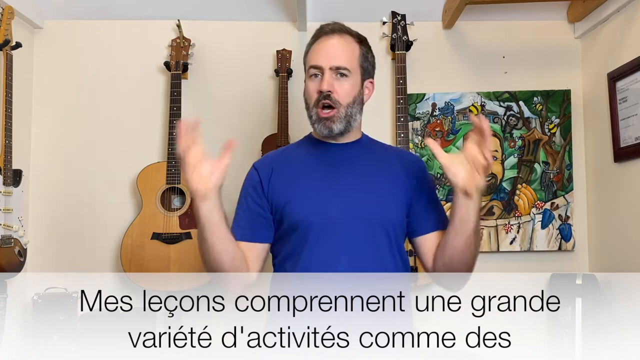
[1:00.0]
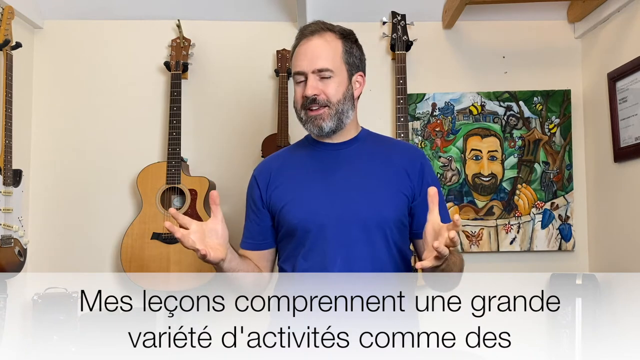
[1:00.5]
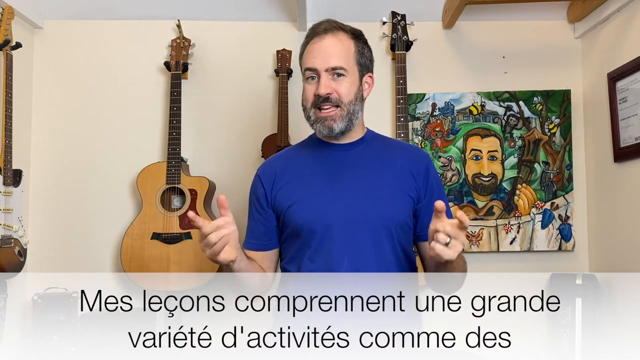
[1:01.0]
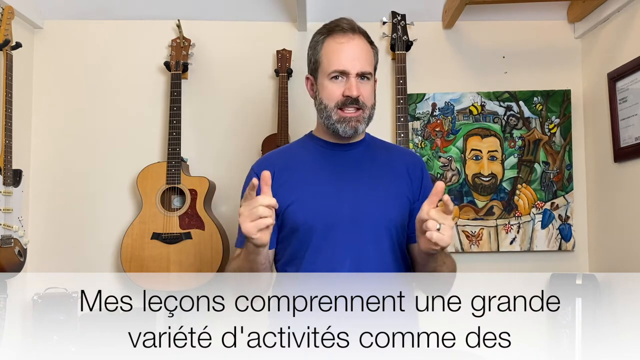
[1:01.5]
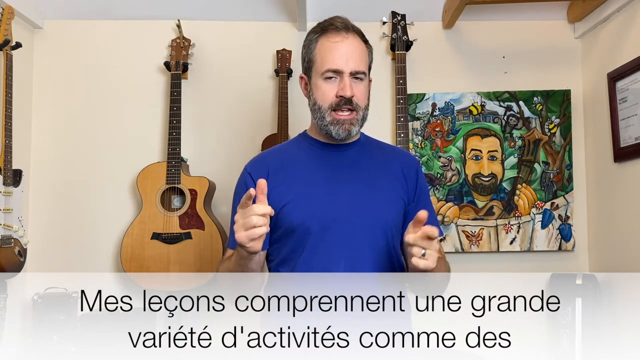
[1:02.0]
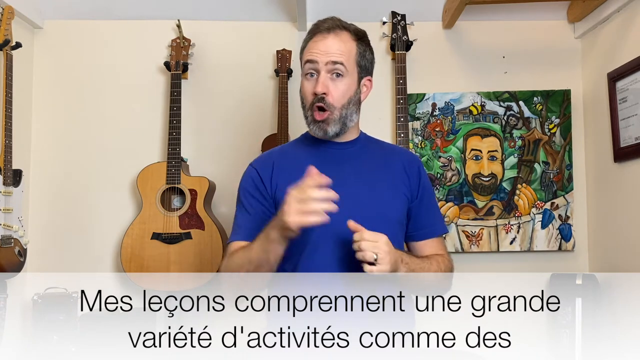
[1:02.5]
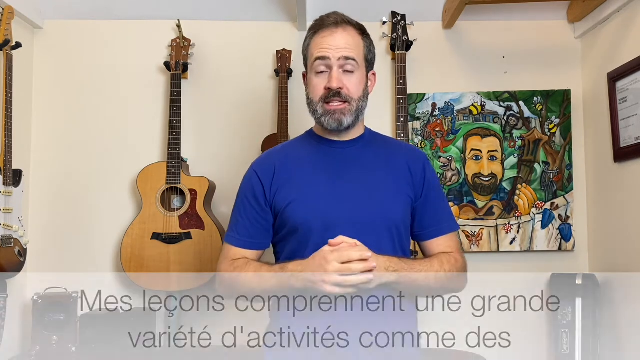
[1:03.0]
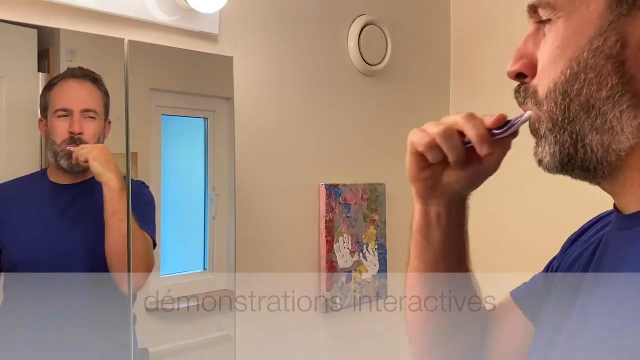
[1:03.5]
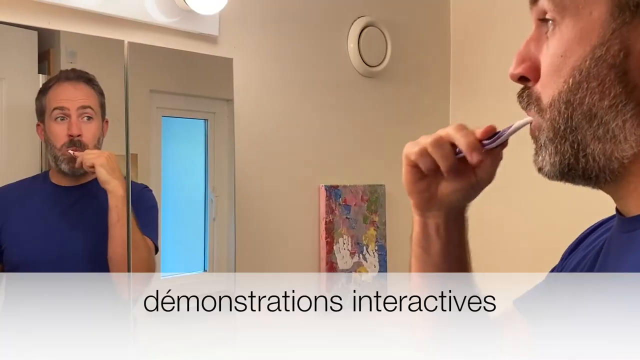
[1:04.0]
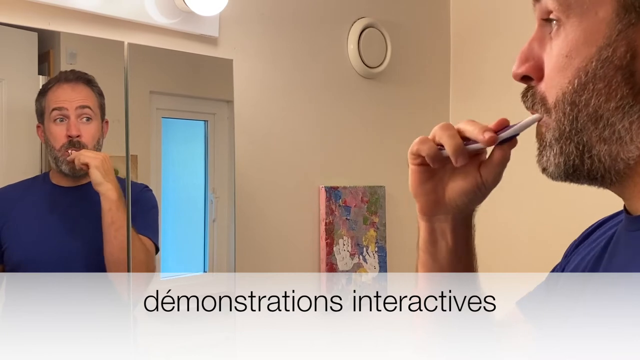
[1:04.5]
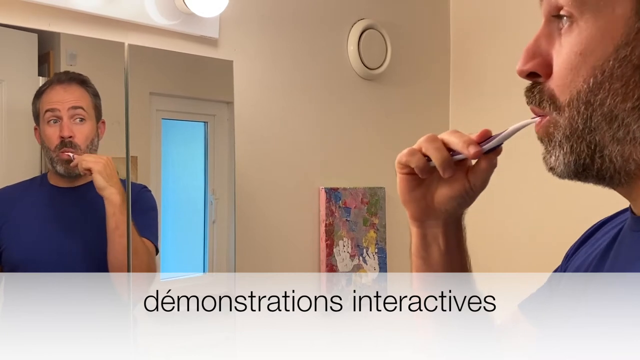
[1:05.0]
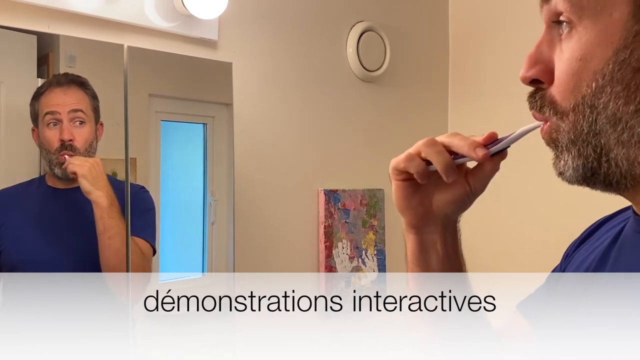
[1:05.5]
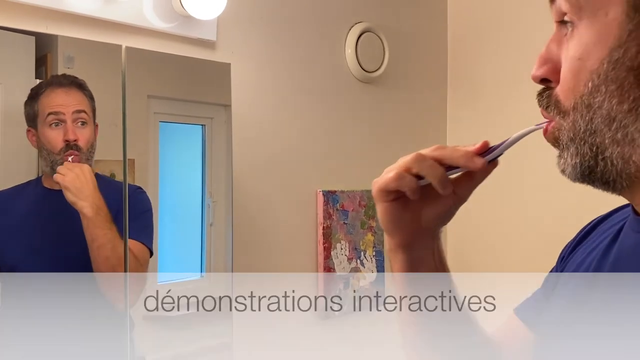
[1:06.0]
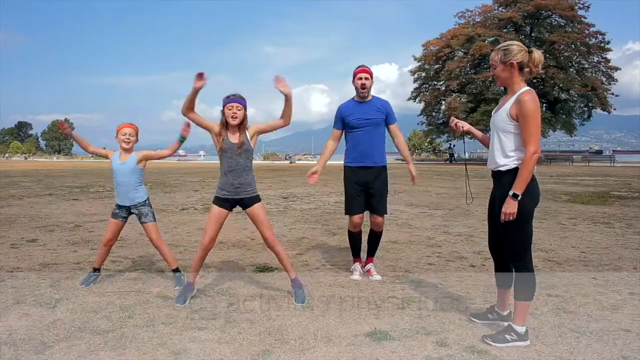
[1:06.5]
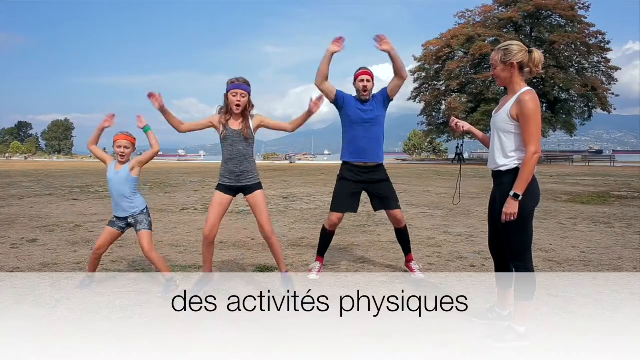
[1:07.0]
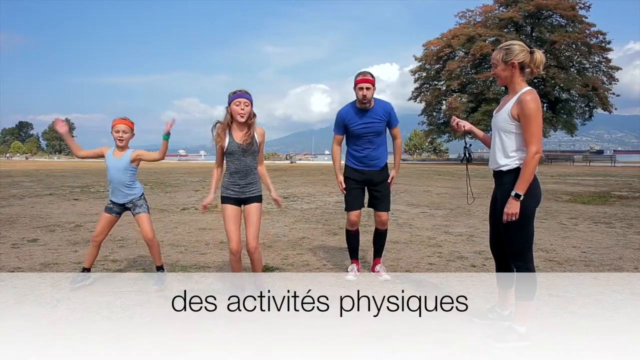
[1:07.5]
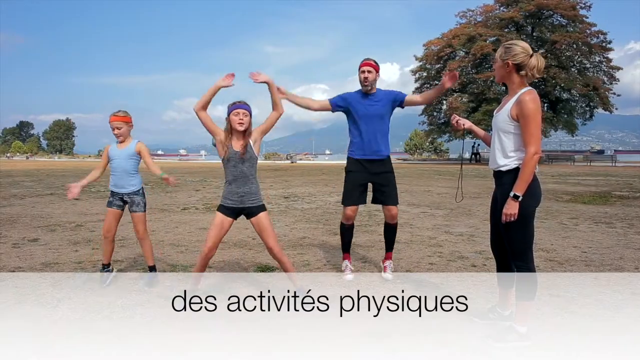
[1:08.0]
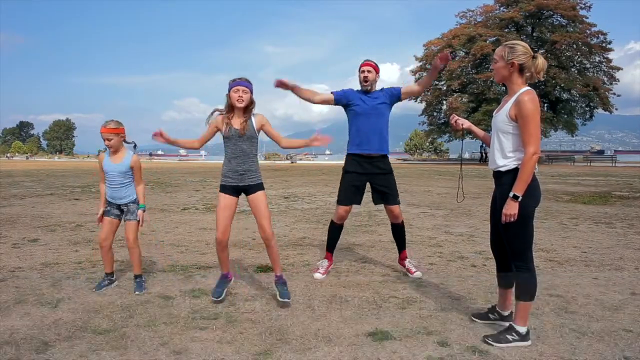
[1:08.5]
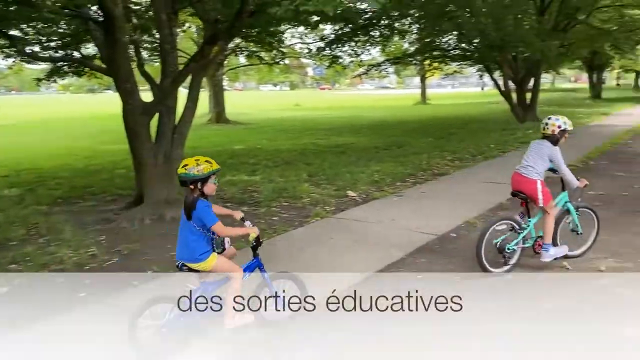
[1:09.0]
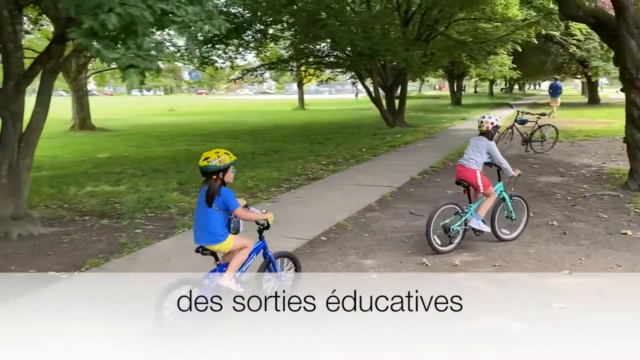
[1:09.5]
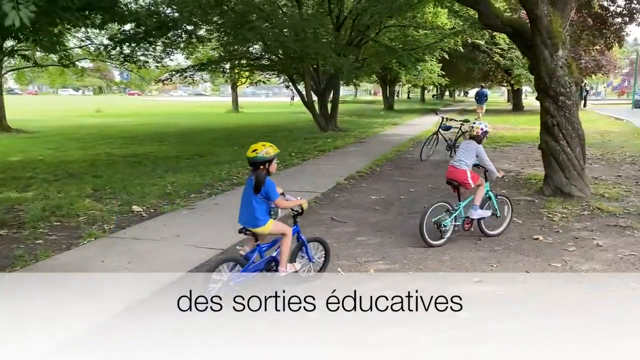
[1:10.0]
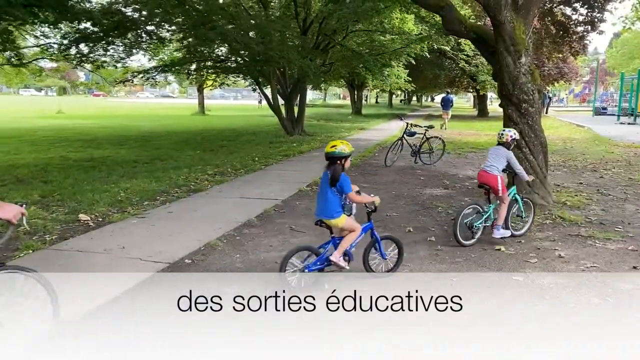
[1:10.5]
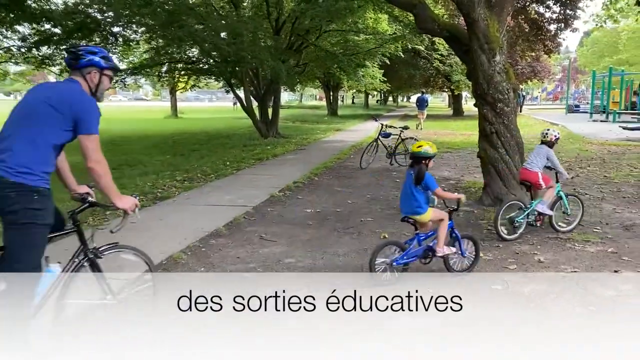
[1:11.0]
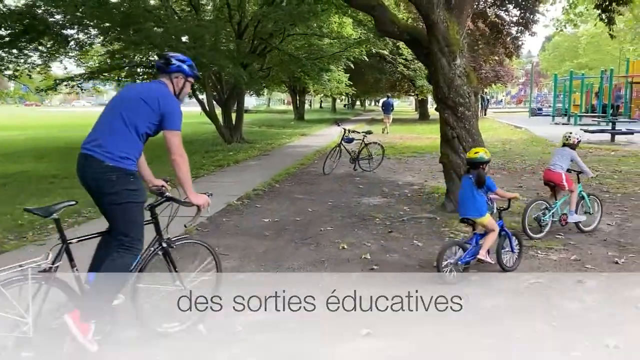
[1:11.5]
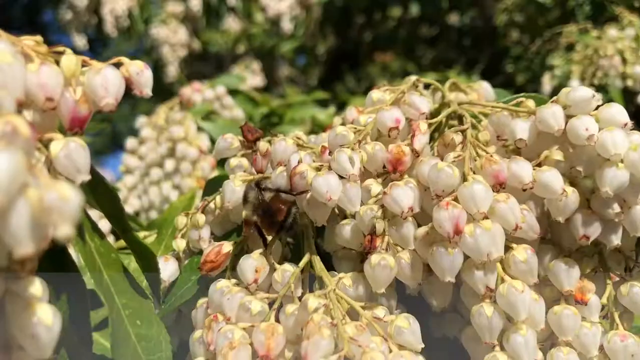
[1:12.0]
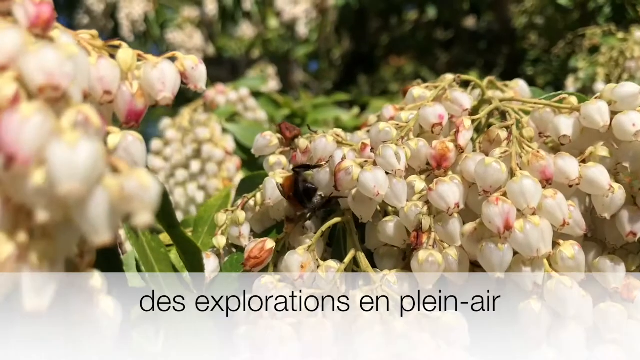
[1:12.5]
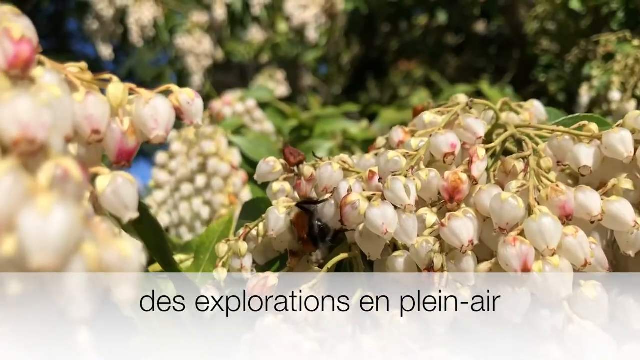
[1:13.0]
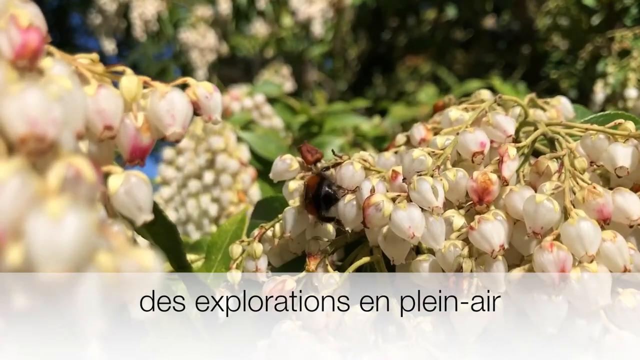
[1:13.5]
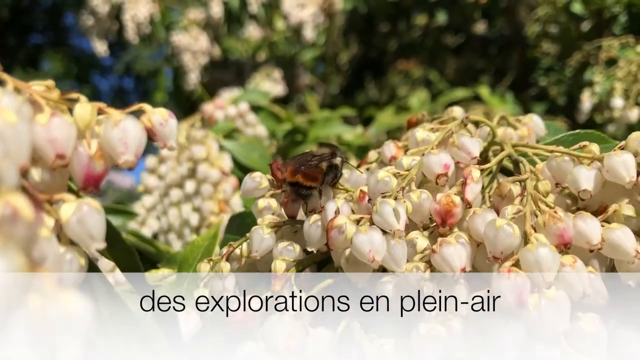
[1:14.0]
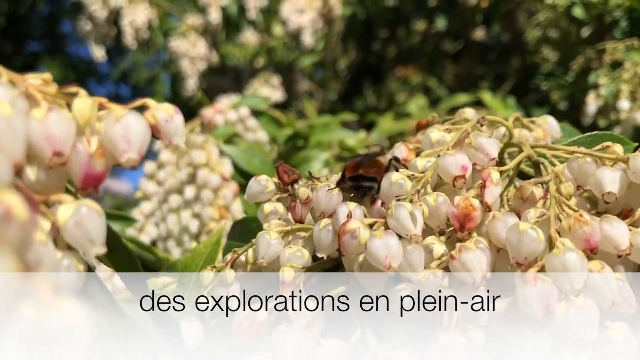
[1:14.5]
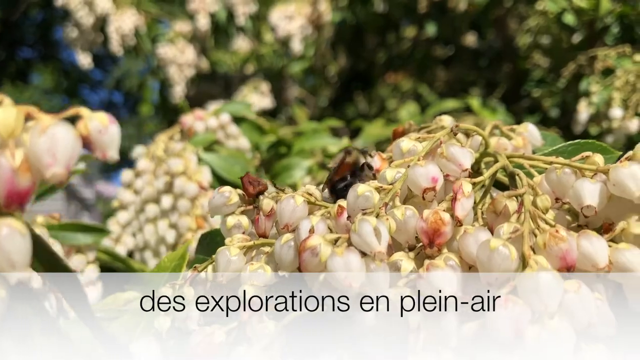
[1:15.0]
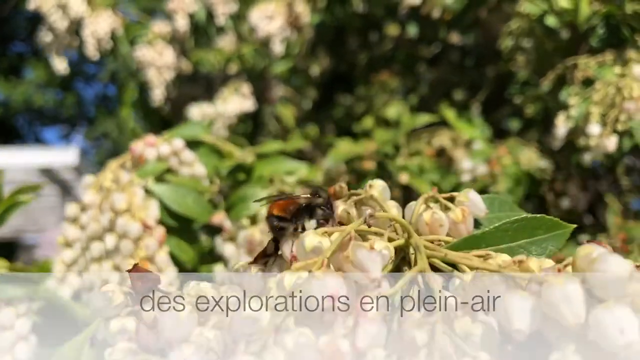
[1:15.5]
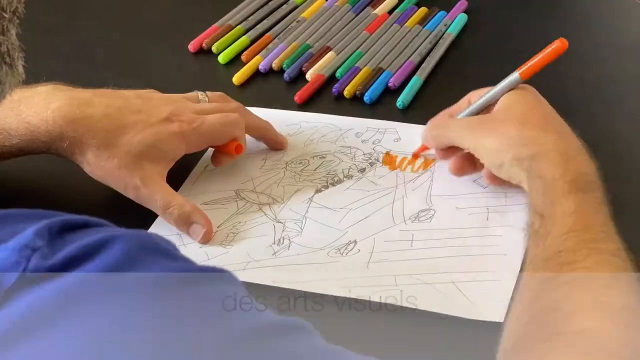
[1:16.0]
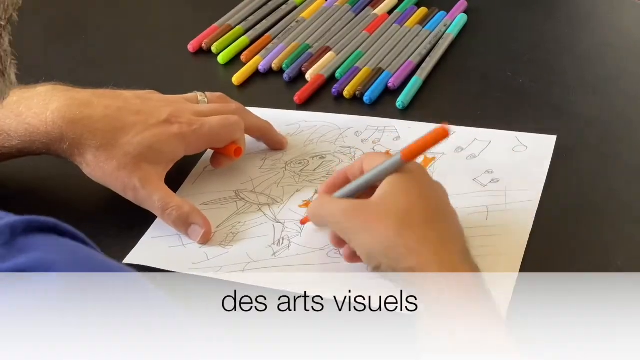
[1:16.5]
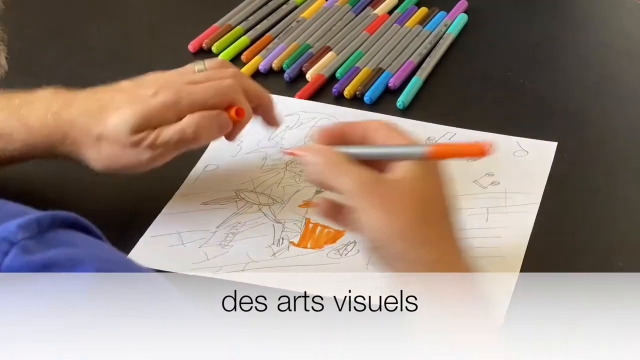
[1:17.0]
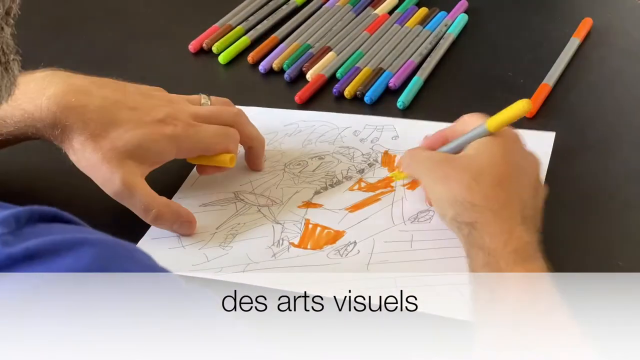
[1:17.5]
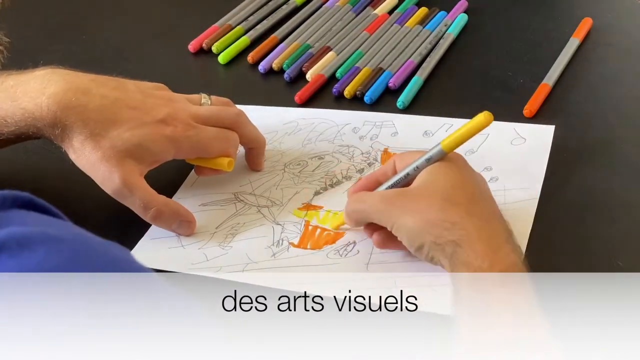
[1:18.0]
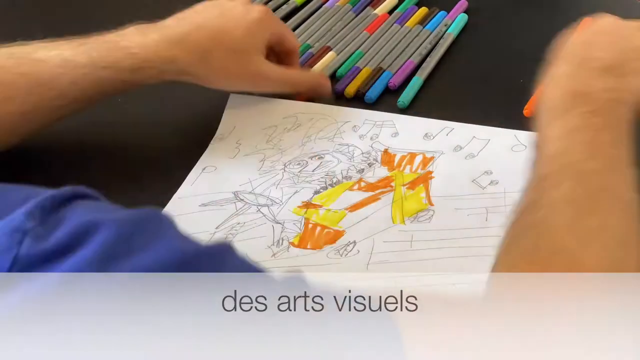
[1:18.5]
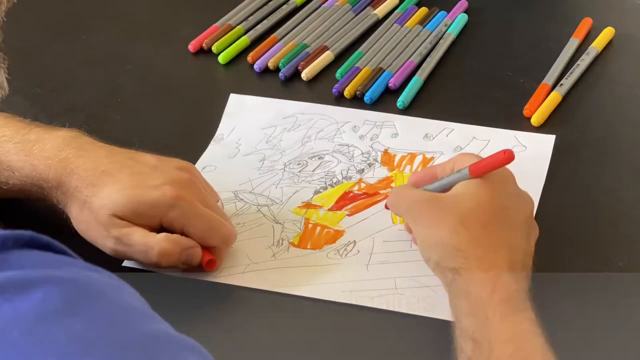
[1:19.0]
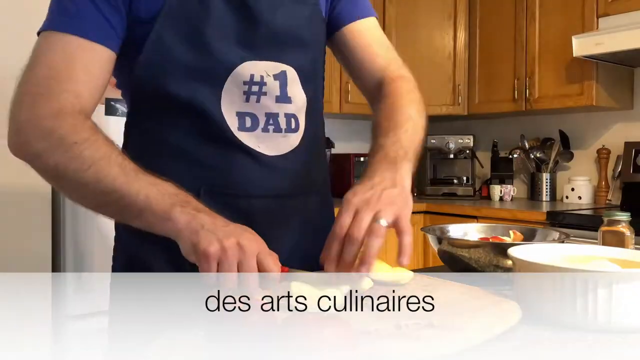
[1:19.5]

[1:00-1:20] A Caucasian man is in the center of the frame. He has dark hair and a dark beard with some gray mixed in, about 40% of the beard being gray, and wears a blue short-sleeved t-shirt. He holds his hands up as he speaks to the camera, someone off camera, or the audience. Behind him are three walls, one directly behind him and two side walls; the room must be small, as the walls are close together and not far behind him. On the left side of the screen is a brown and white electric guitar. On the back wall behind the man is a tan or light brown guitar with darker brown accents, and two other guitars behind him show only their bridges. On the right side of the back wall is a cartoonish-looking painting of this same man holding a guitar. On the right wall is some kind of framed plaque or certificate, maybe a degree or certification. Black text at the bottom of the screen reads "MES LECONS COMPRENNENT UNE Grande".